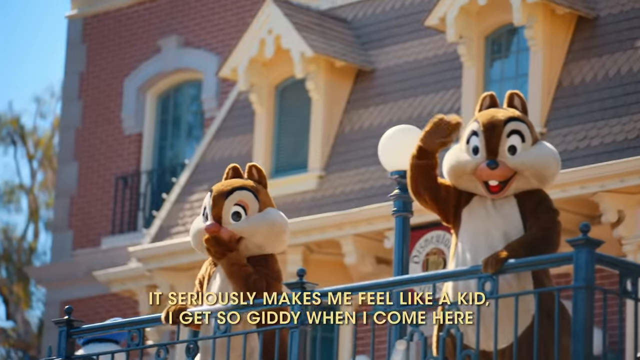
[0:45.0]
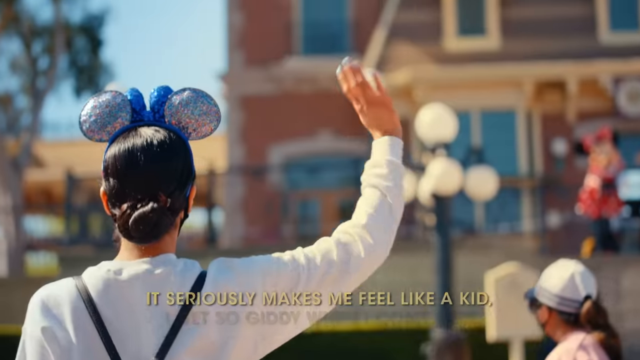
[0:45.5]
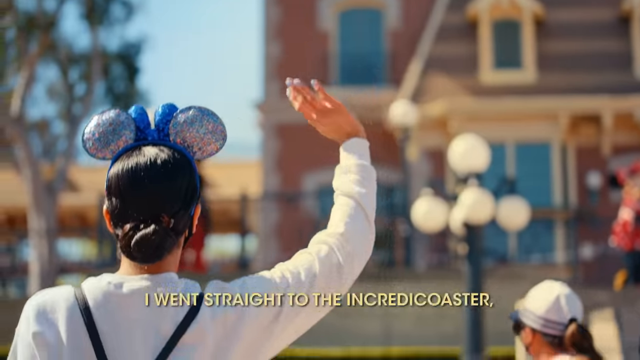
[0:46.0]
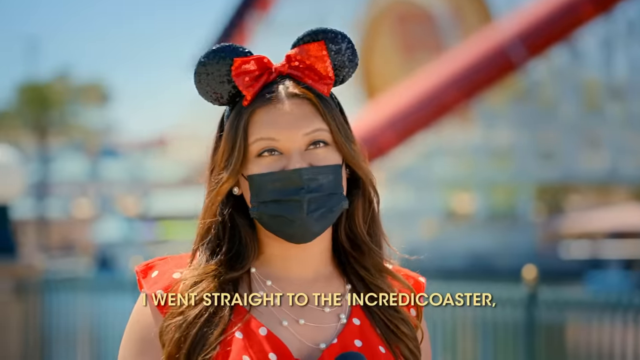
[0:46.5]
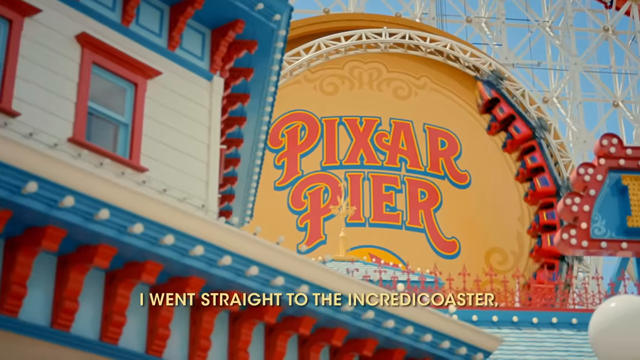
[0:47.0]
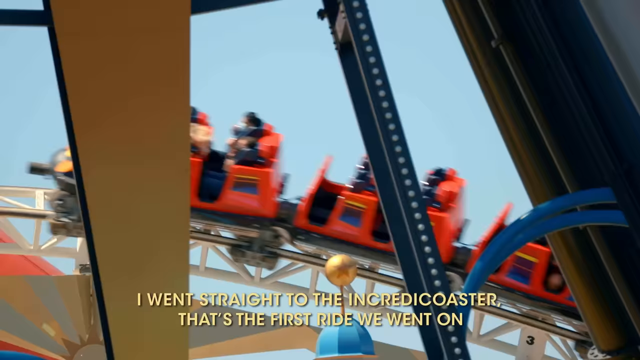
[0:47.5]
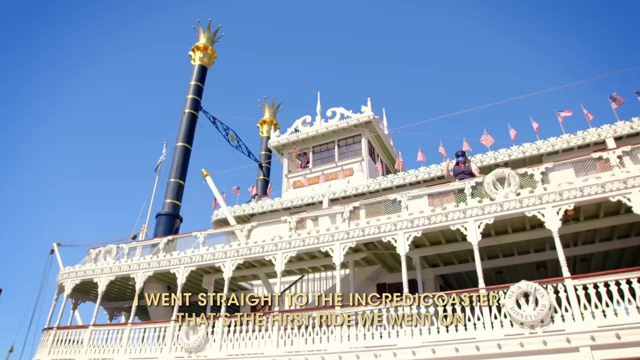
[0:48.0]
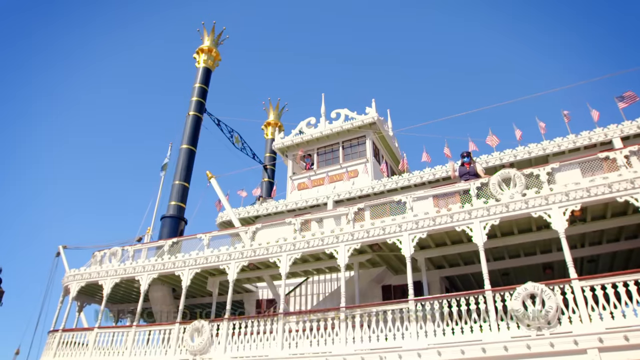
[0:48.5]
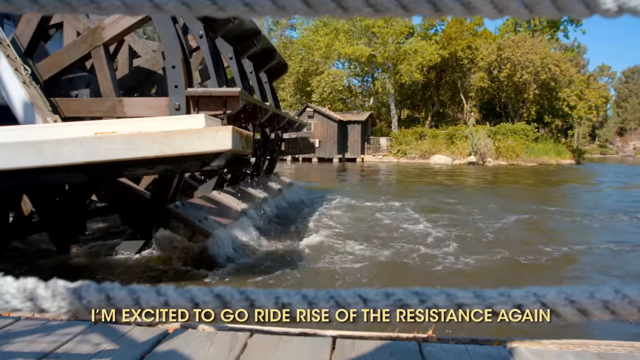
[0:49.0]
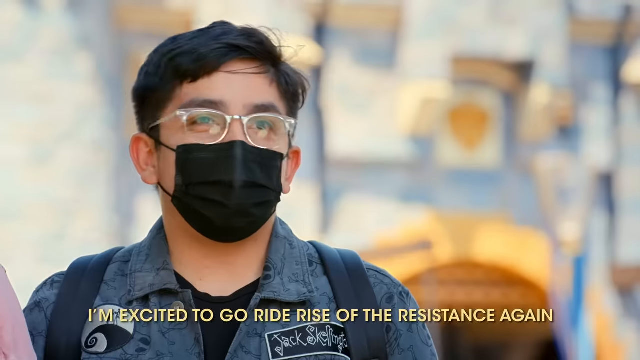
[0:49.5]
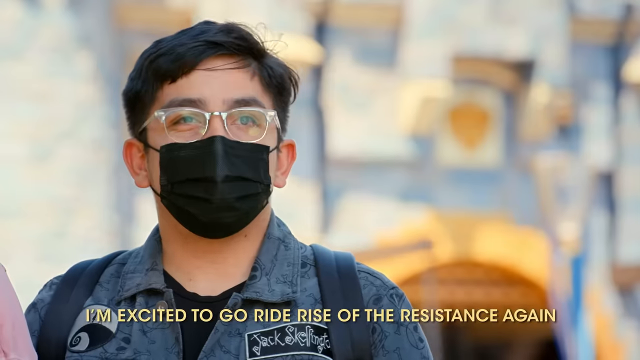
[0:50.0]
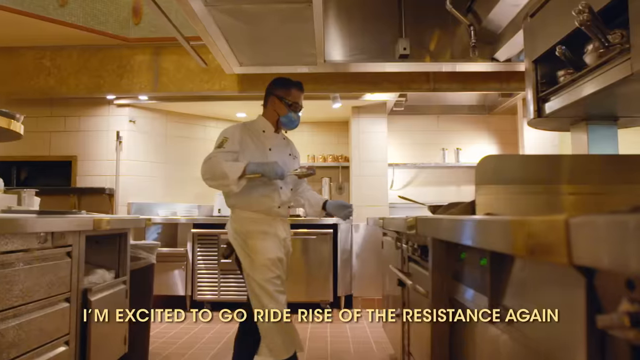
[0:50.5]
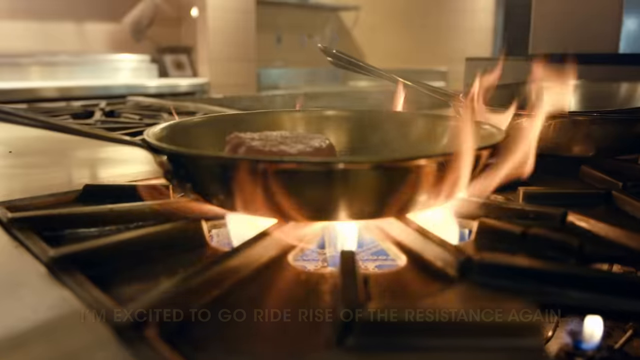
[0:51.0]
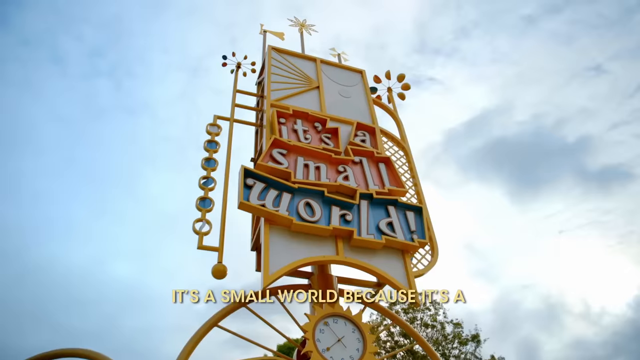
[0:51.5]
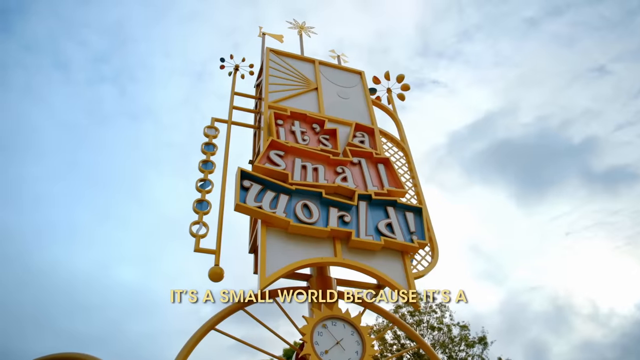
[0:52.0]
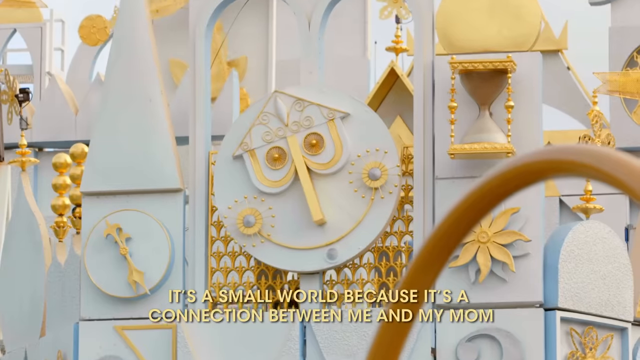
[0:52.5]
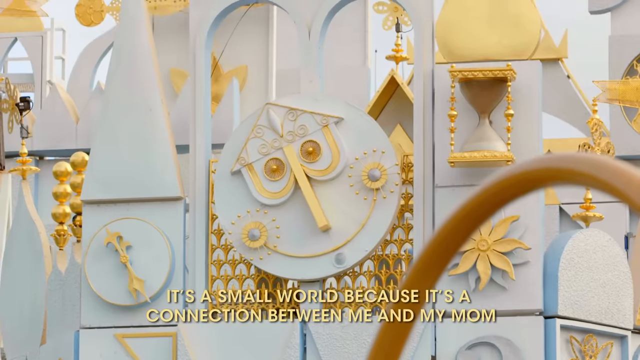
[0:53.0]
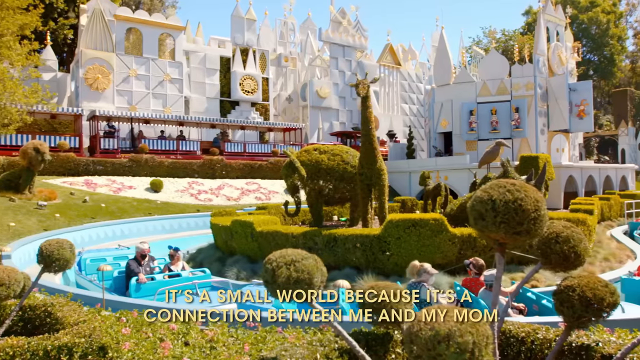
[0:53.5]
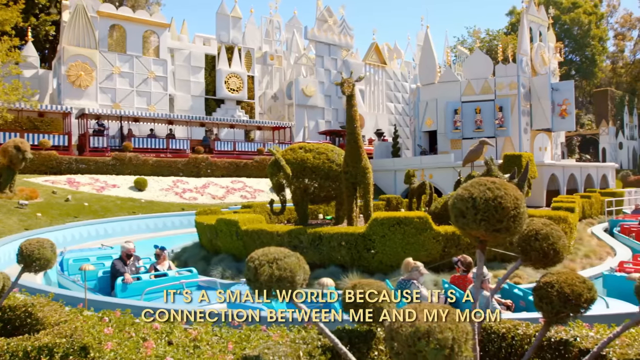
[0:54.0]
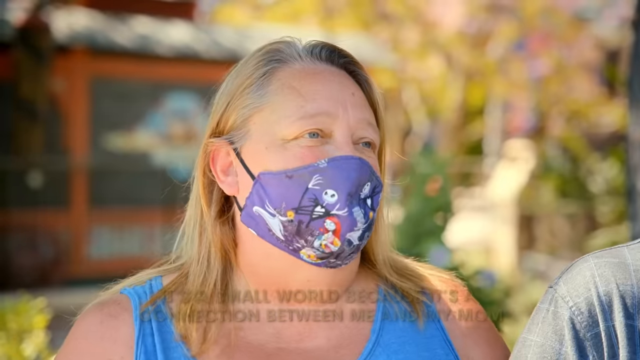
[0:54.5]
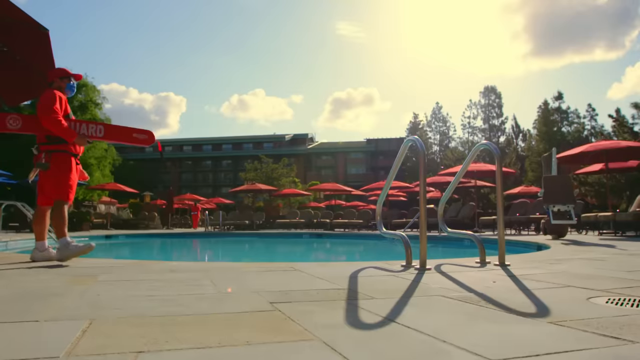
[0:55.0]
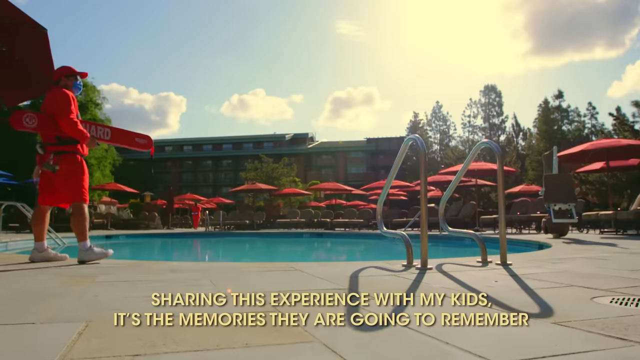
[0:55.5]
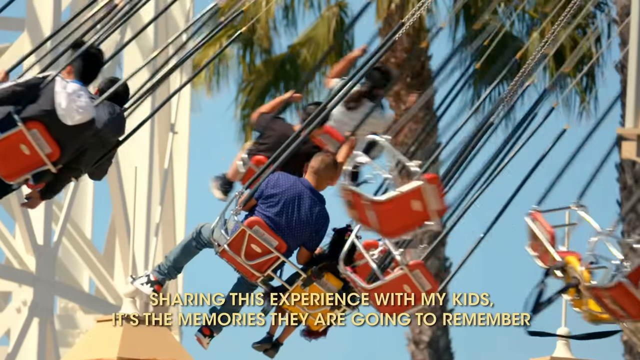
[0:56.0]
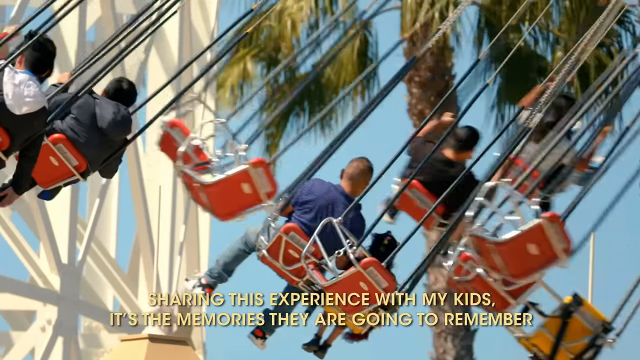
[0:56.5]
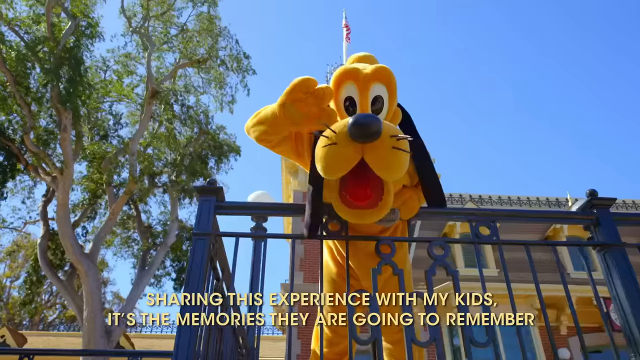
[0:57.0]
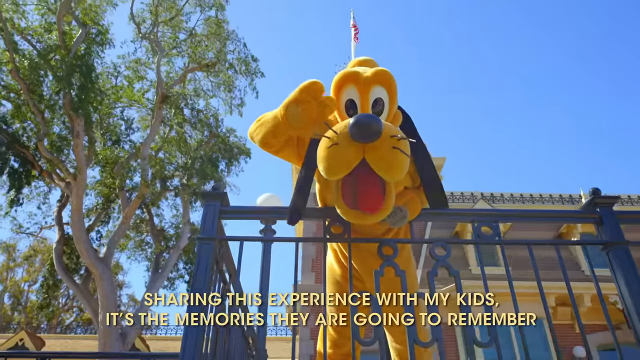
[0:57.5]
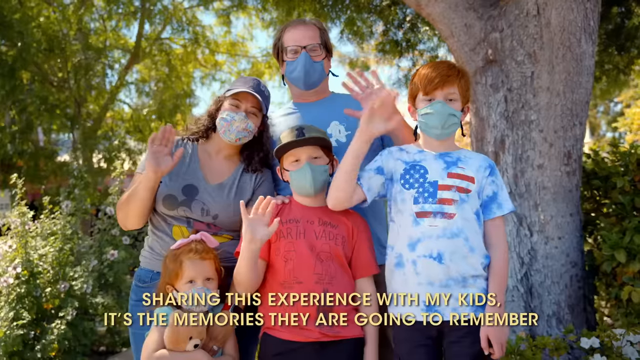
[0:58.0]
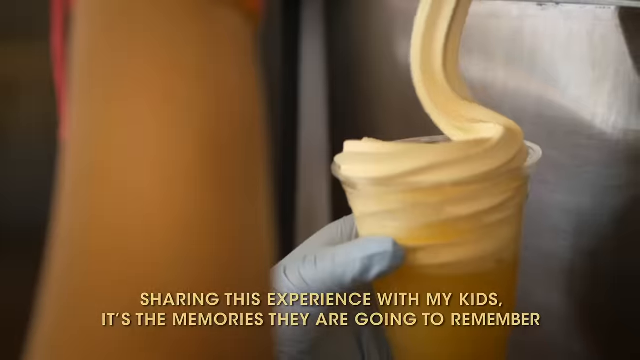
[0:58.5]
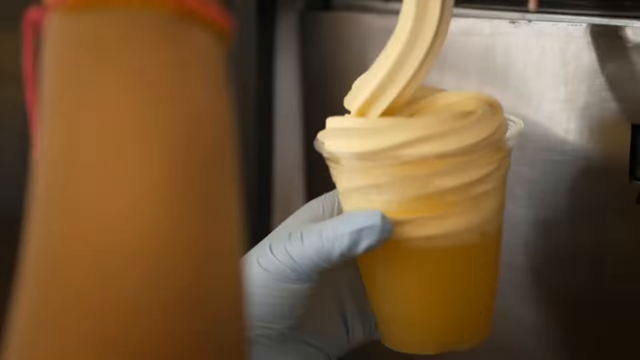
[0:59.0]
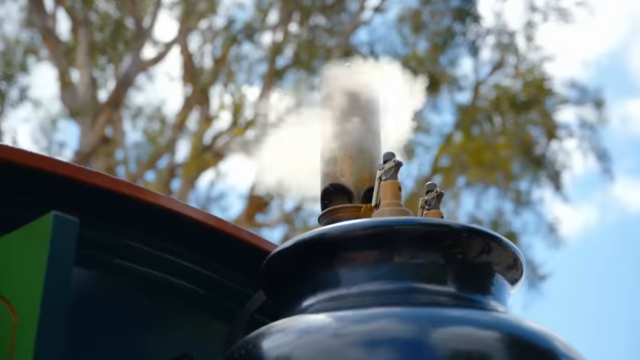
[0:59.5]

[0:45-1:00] The chipmunks wave at each other or at the screen, and the montage of attractions and rides continues, with people waving back at them. Most visitors wear masks and Mickey Mouse or Minnie Mouse ears. Many families wave in large groups as they talk to the person filming them, possibly explaining their excitement about being back. There are all kinds of people, including an older woman and a family with young kids. A roller coaster runs in the background, going in a loop, with text that looks like it reads "Pleasure Pier." The video then skips to another ride labeled "It's a Small World." A fairy kicks up water. A steak is being made in a restaurant, and a chef walks away from a big flame while preparing the meal. A little lazy river appears, followed by swings that lift people up and swing them around, with lots of people on them; the rides now have people on them. One caption reads "I'm excited to go on the rides," and another reads "It's a Small World." Apparently Goofy waves from the top of a balcony.